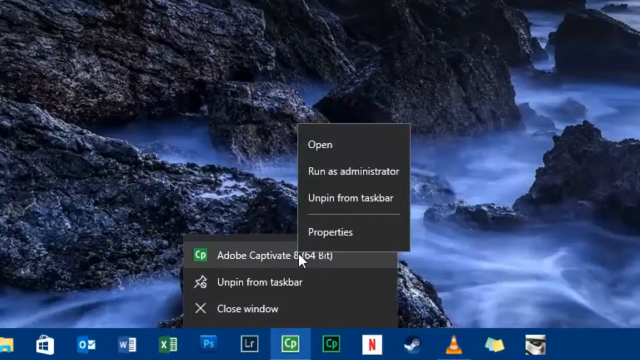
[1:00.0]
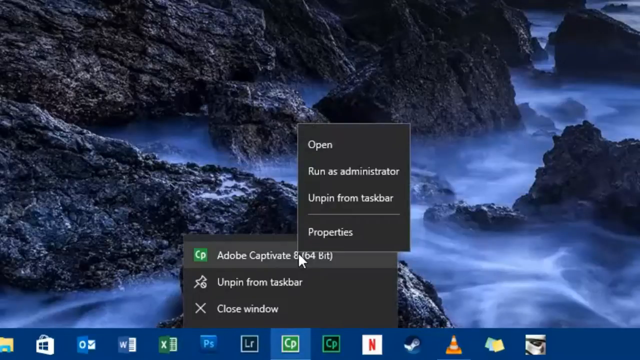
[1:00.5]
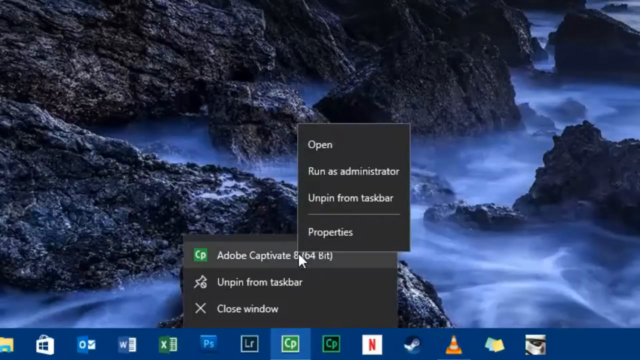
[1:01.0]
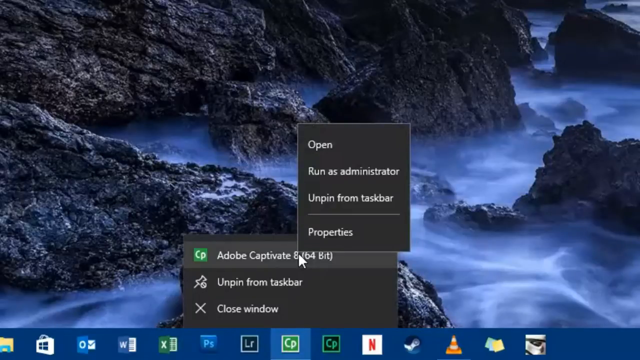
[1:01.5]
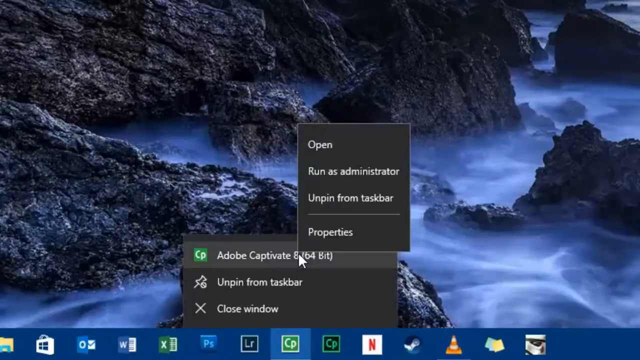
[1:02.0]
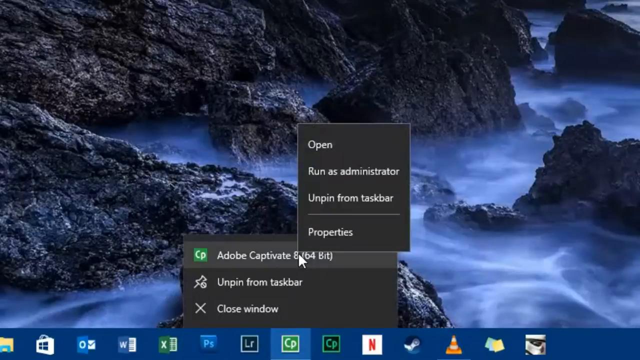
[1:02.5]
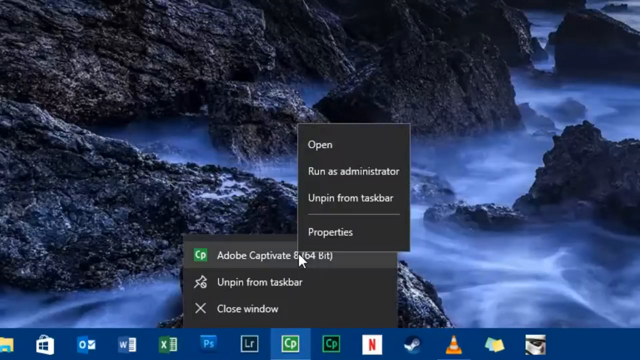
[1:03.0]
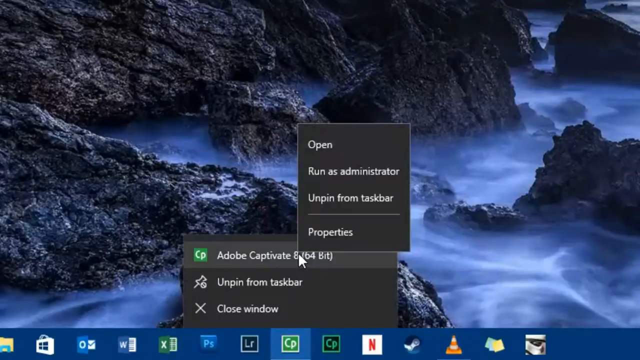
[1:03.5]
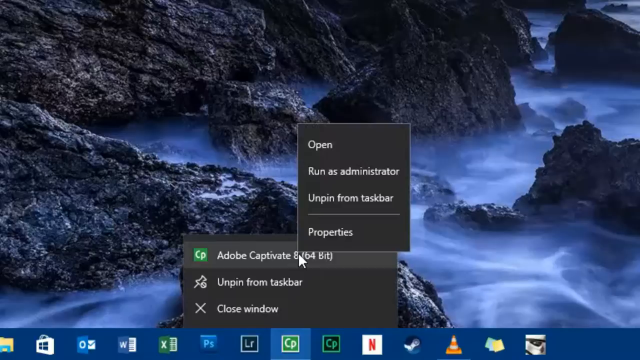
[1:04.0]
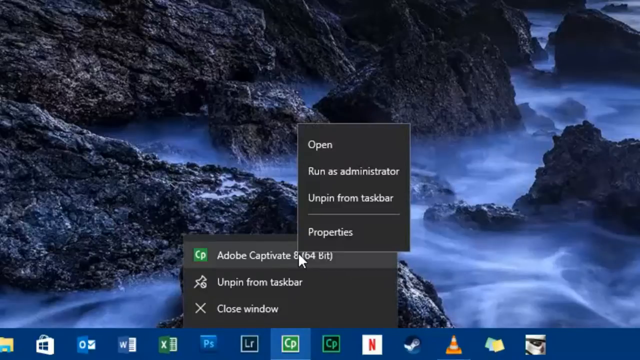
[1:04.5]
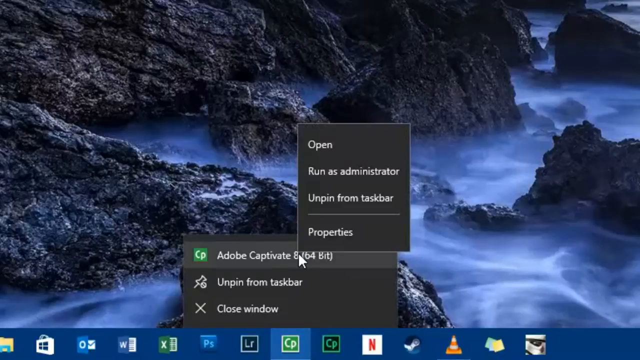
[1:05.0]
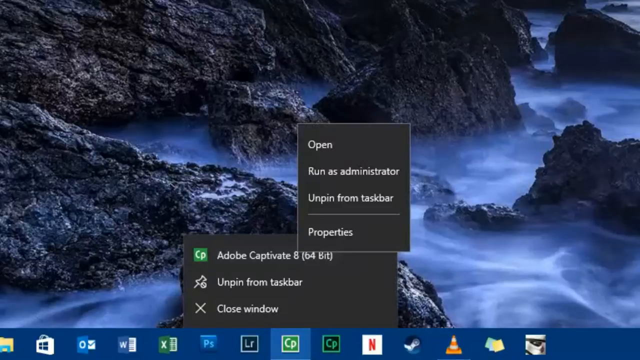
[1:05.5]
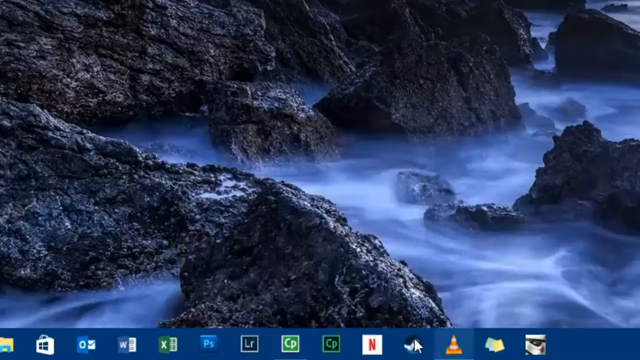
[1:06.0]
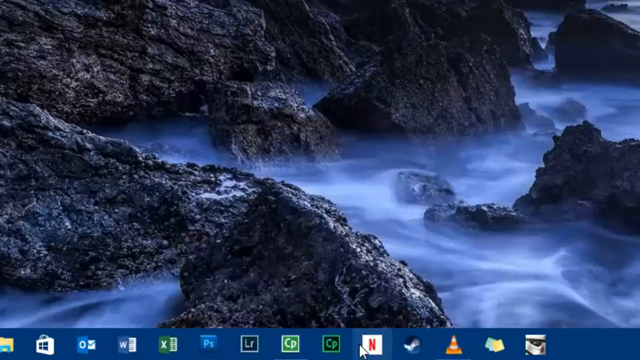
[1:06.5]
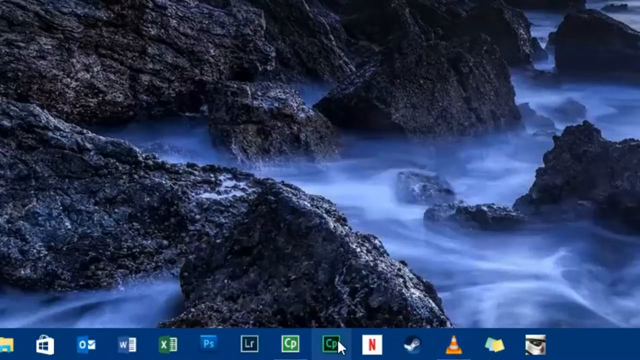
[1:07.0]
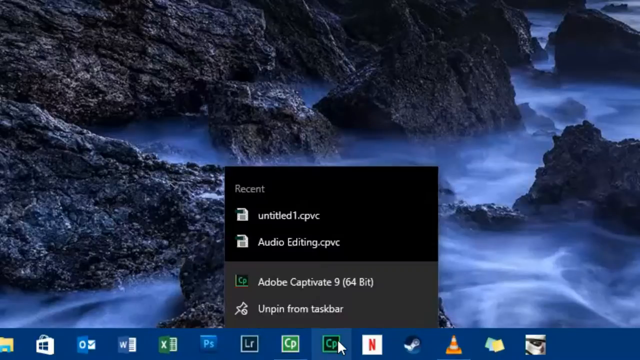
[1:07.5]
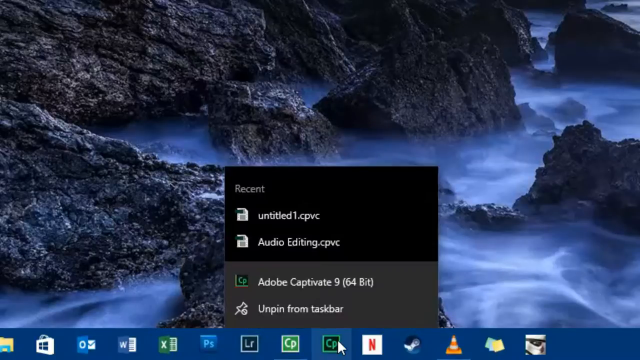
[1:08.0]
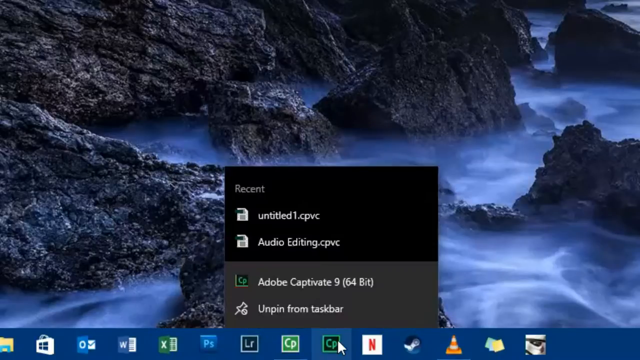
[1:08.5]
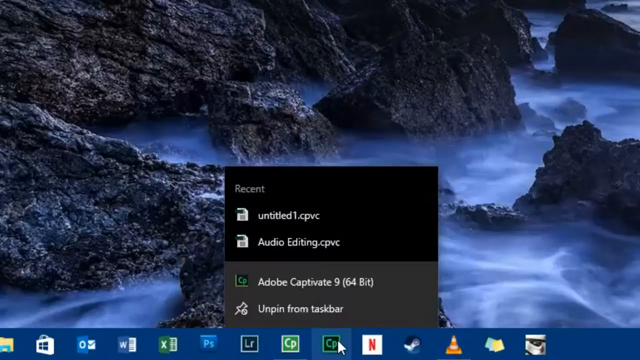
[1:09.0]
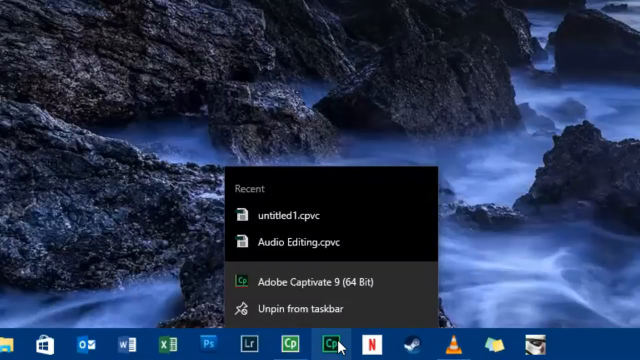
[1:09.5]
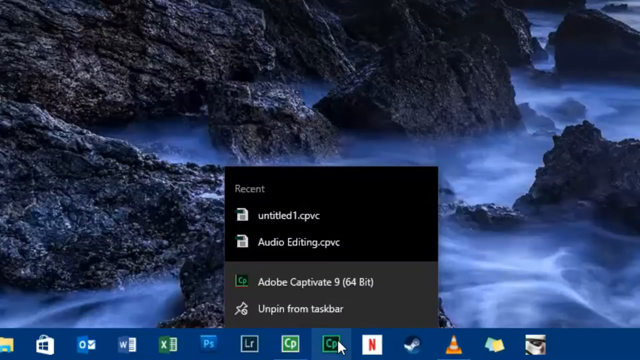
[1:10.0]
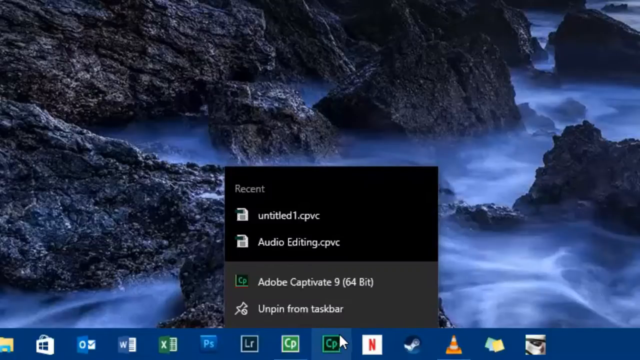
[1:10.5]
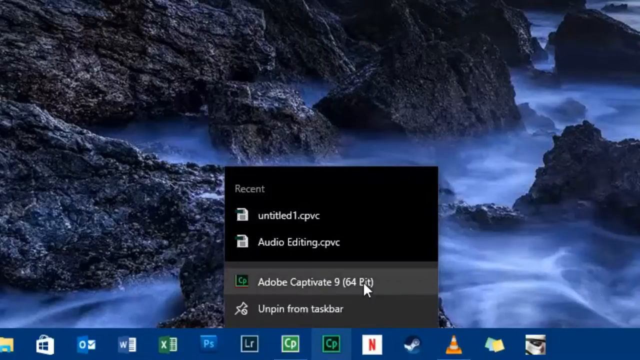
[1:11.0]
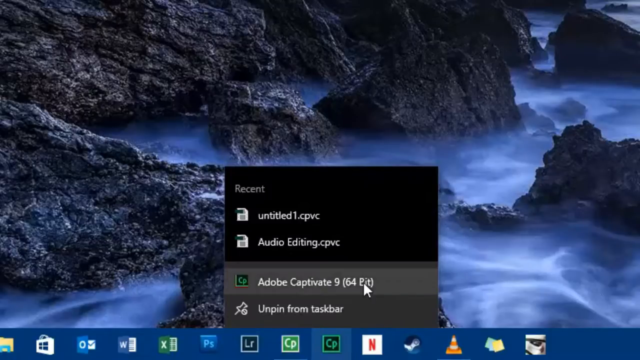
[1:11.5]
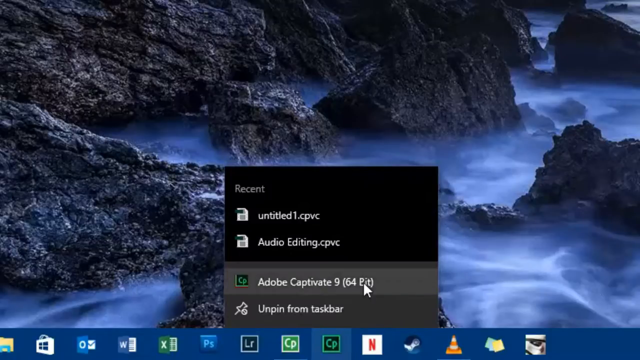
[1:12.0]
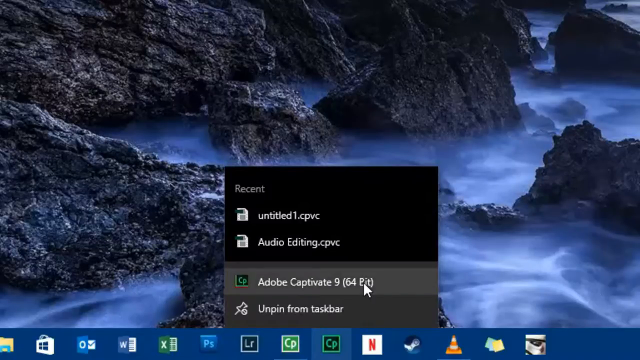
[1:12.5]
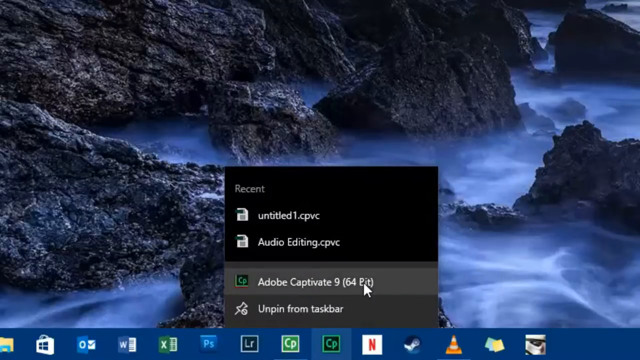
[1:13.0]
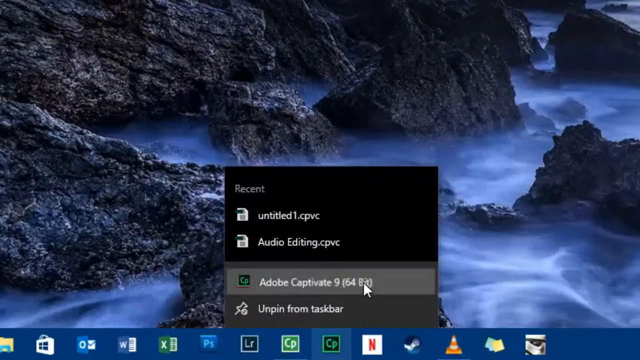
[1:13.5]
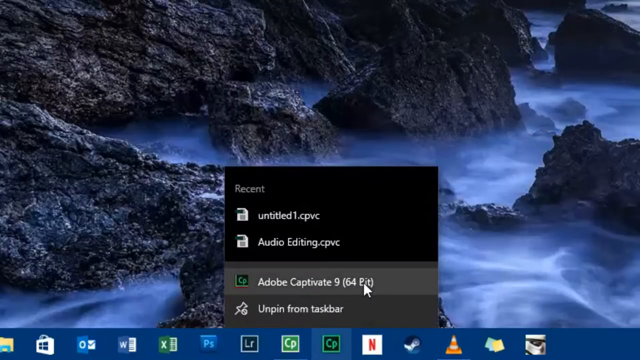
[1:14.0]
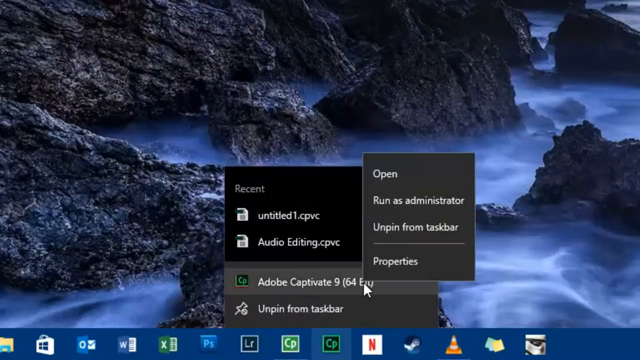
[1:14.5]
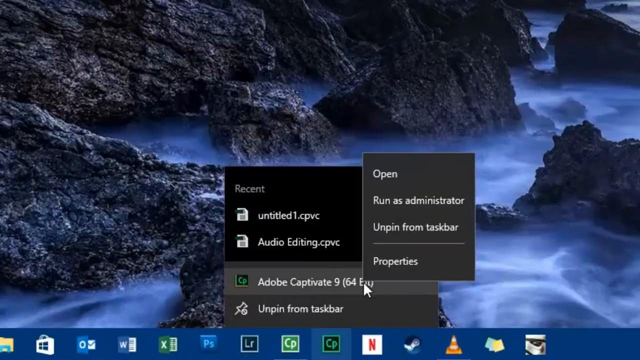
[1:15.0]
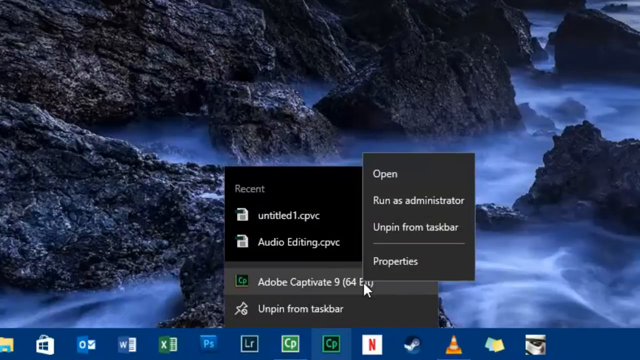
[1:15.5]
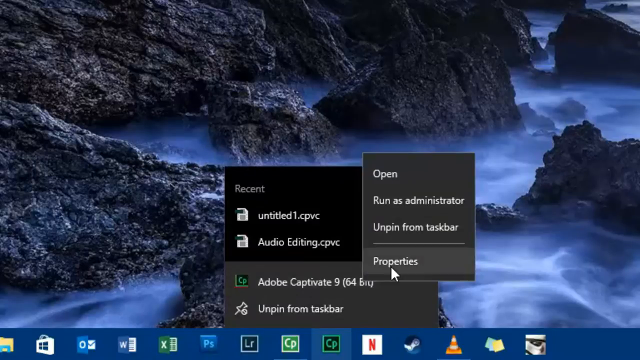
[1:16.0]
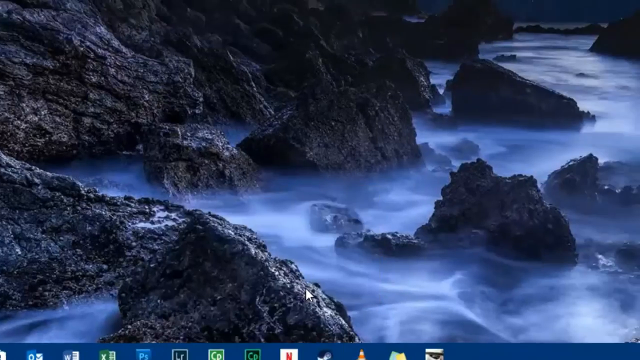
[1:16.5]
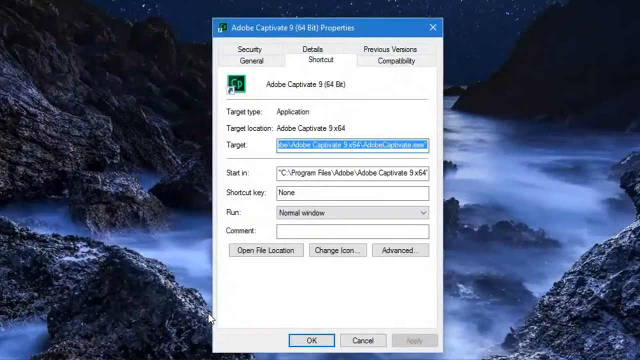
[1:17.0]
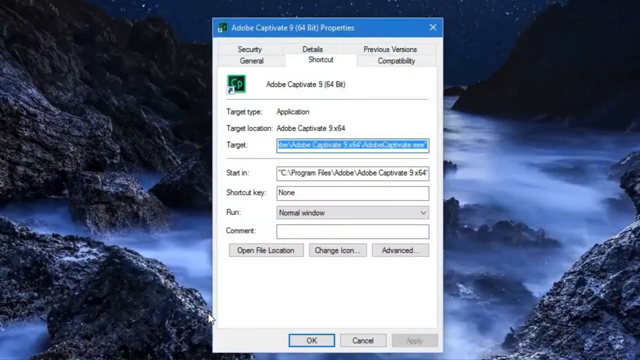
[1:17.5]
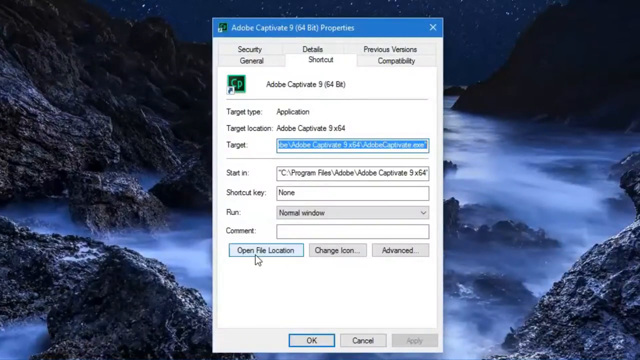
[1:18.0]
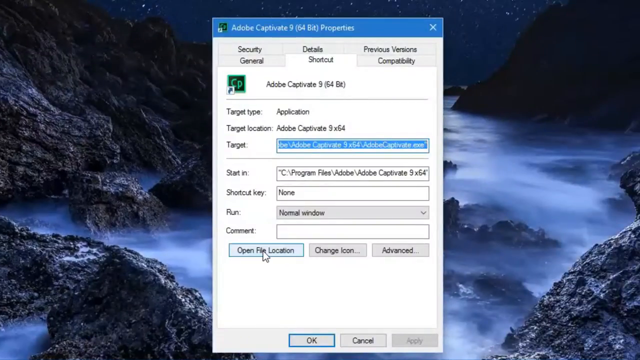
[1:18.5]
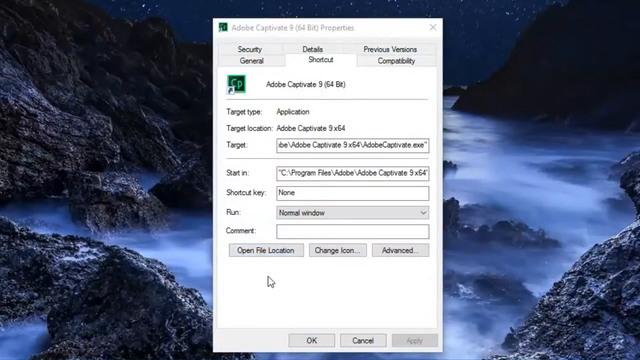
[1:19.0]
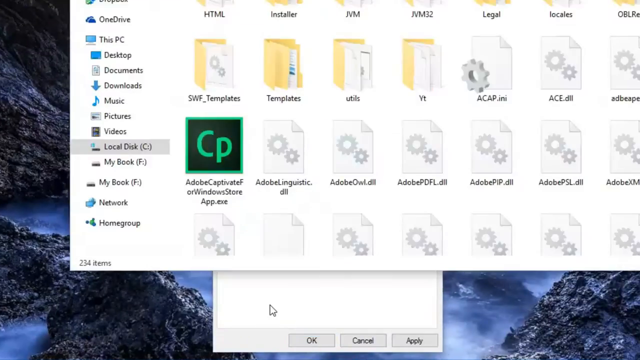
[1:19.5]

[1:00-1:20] The person opens different tabs. At the very bottom of the desktop screen there is a Netflix tab along with a bunch of other tabs. An Adobe Captivate 64-bit item appears, and hovering over it shows options such as open, run as administrator, and unpin from the taskbar. Properties are also shown, with mountains in the background.